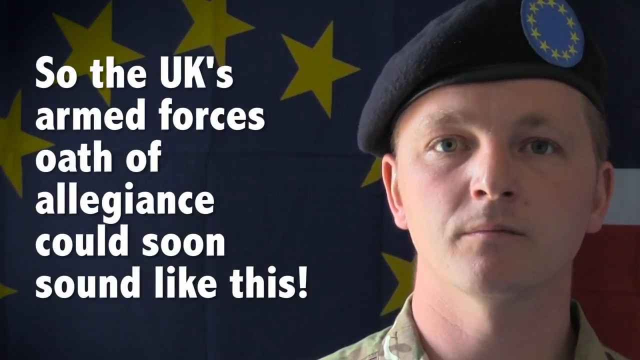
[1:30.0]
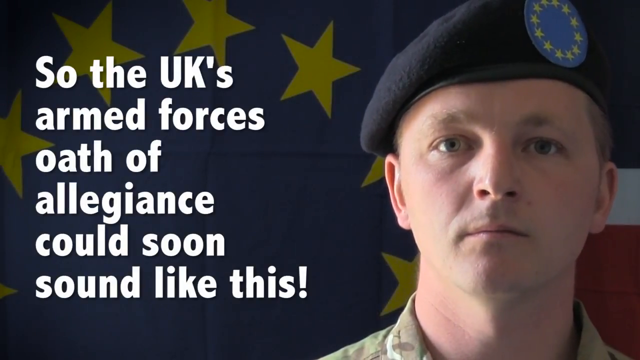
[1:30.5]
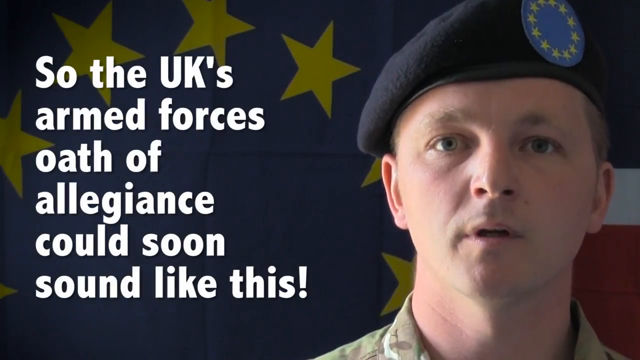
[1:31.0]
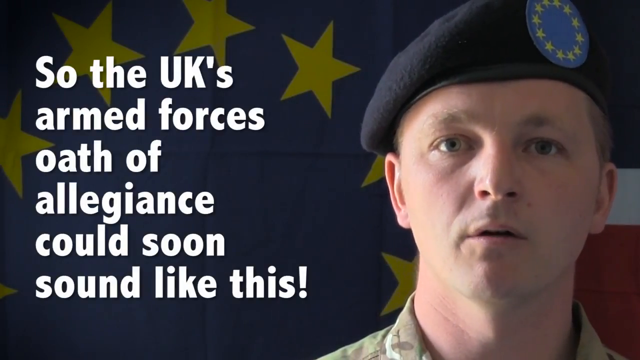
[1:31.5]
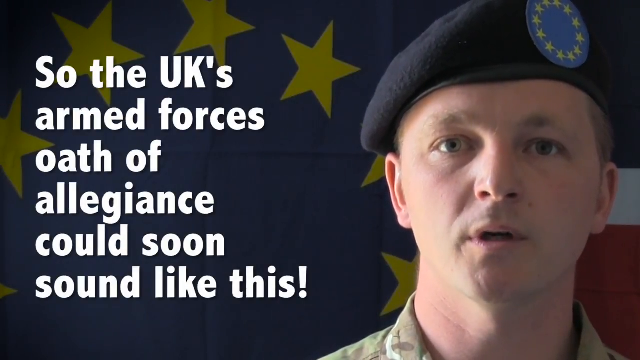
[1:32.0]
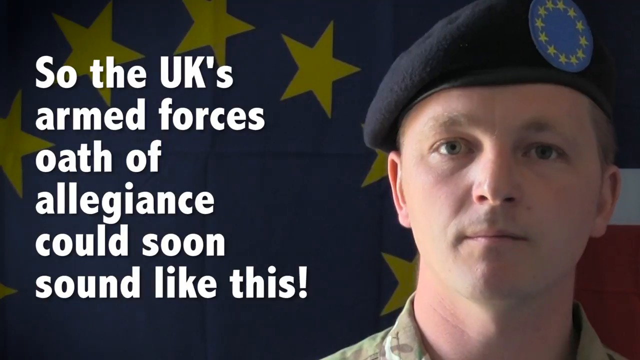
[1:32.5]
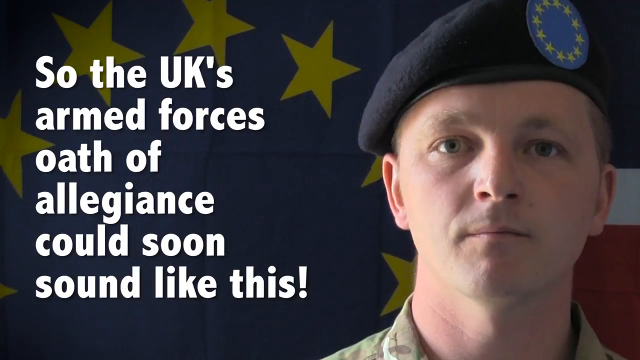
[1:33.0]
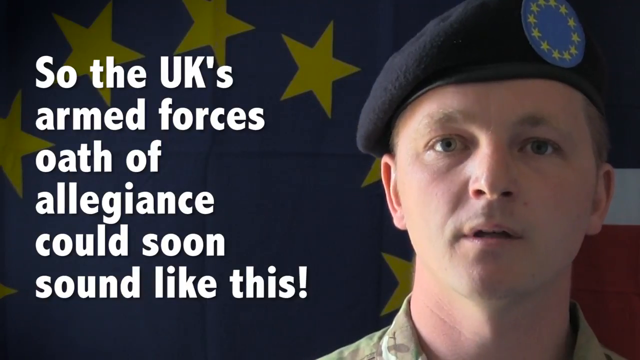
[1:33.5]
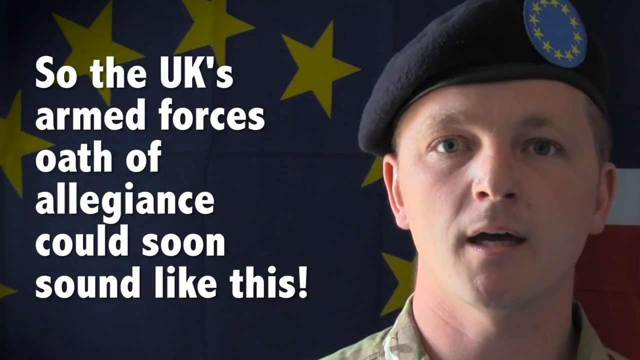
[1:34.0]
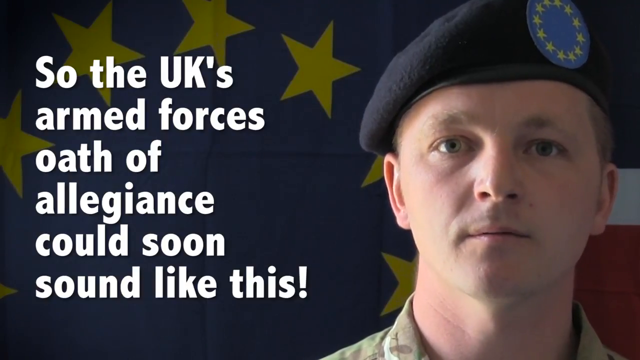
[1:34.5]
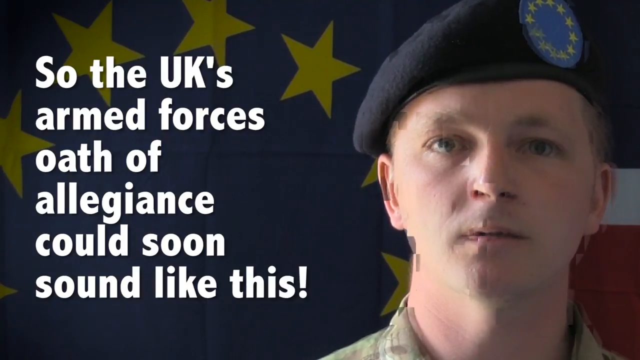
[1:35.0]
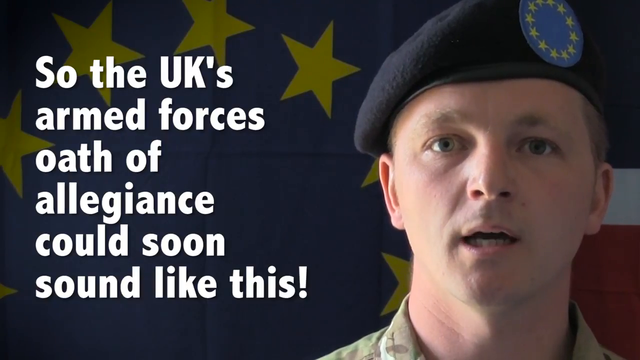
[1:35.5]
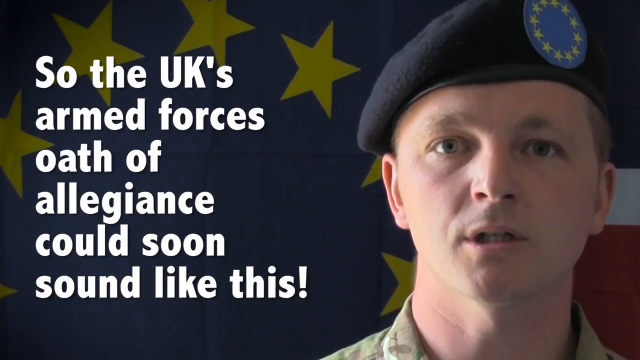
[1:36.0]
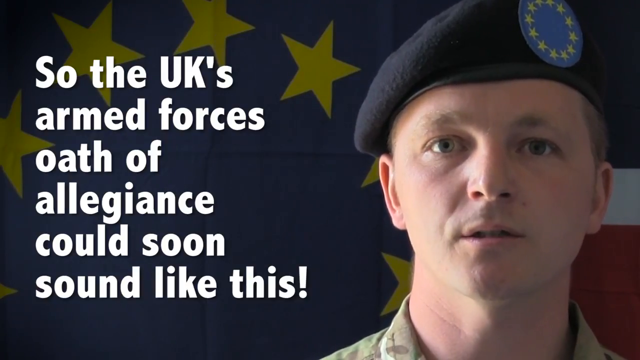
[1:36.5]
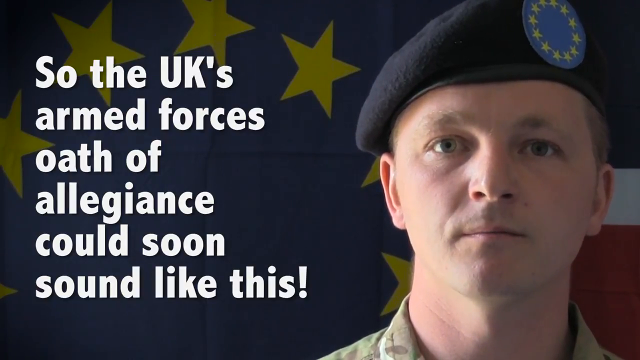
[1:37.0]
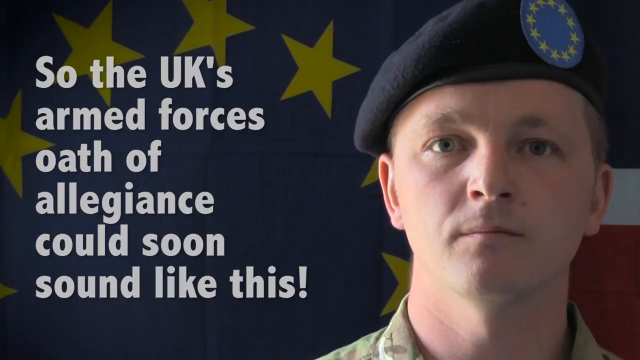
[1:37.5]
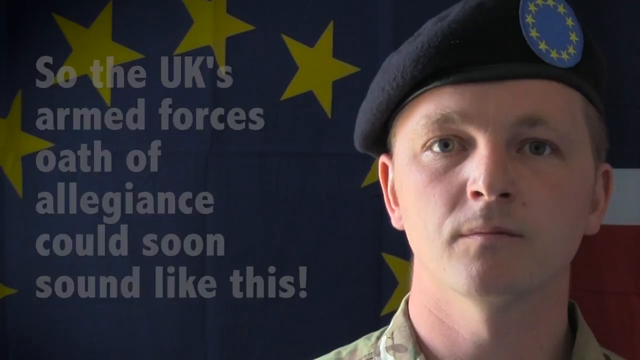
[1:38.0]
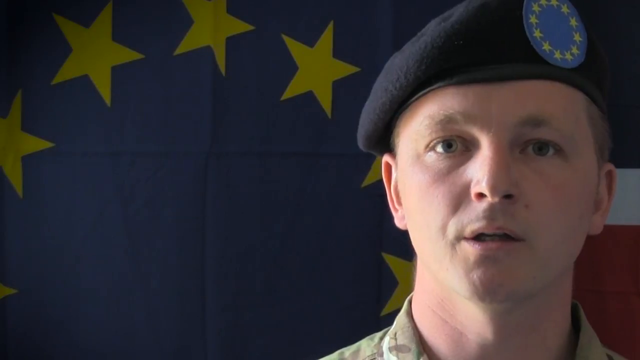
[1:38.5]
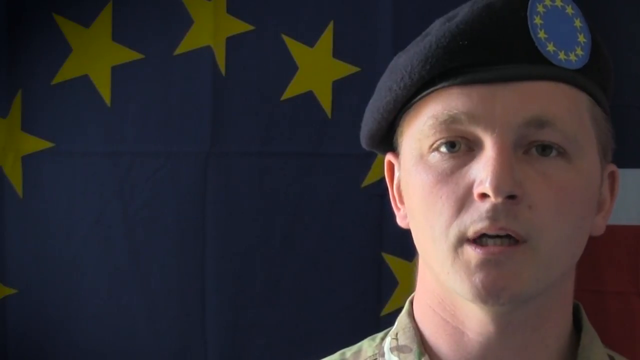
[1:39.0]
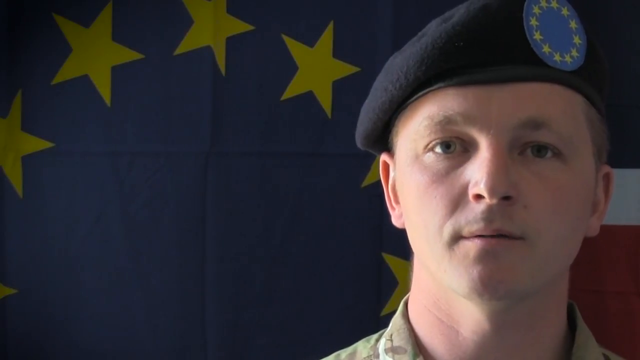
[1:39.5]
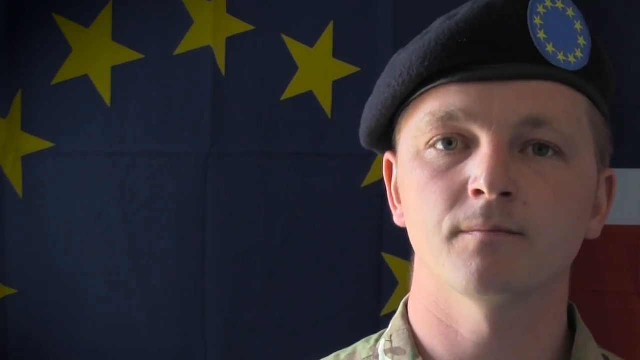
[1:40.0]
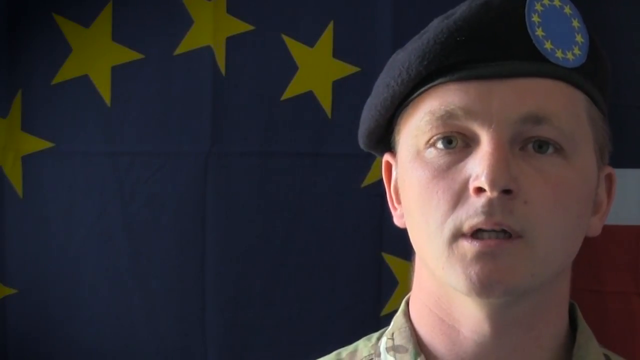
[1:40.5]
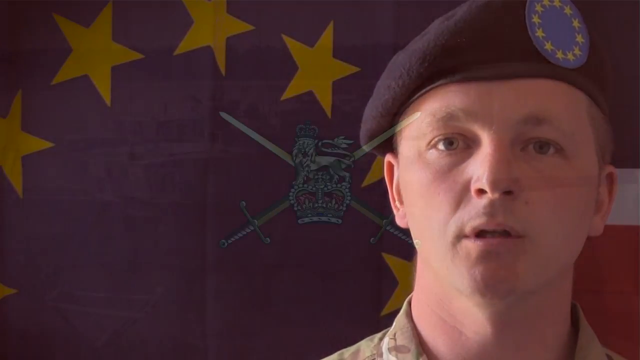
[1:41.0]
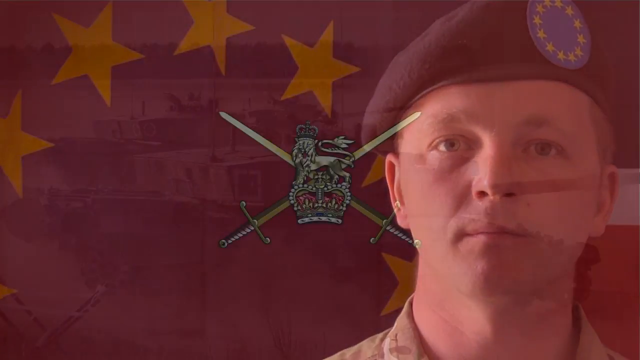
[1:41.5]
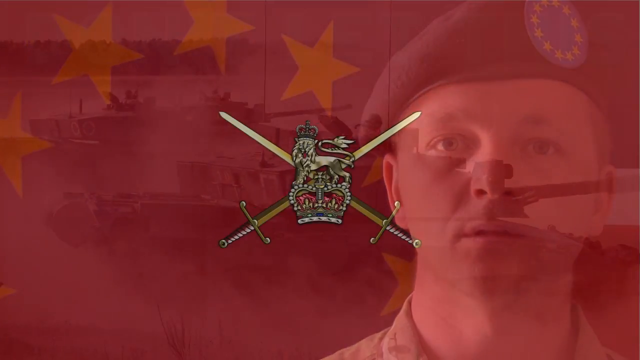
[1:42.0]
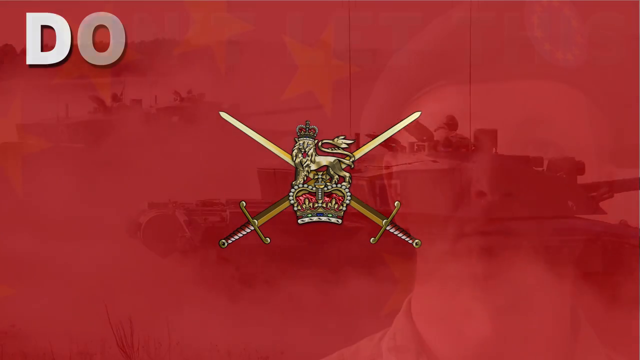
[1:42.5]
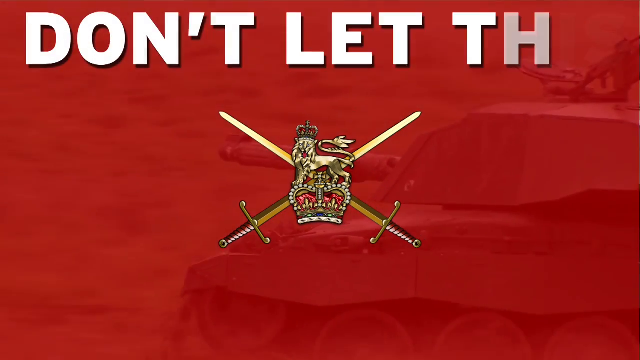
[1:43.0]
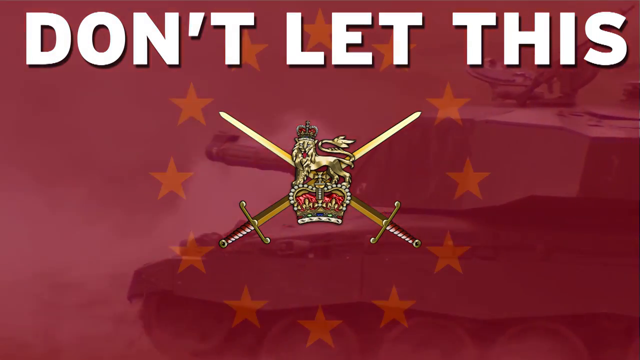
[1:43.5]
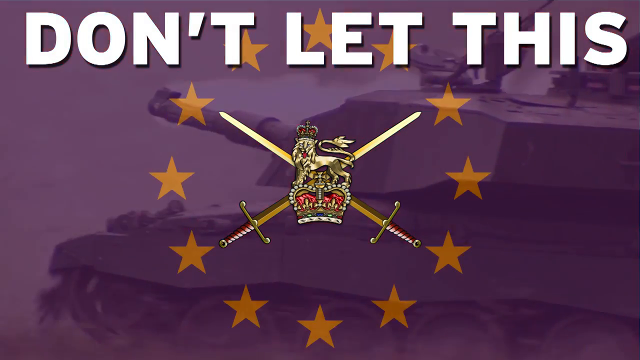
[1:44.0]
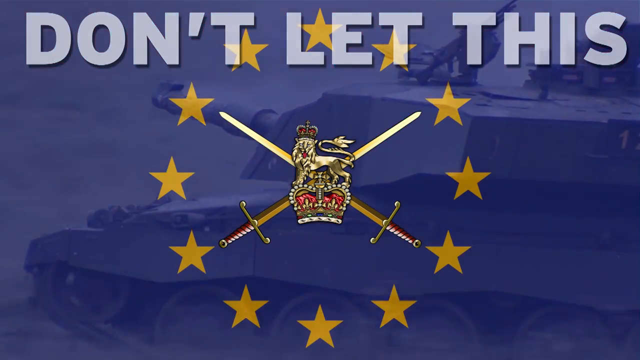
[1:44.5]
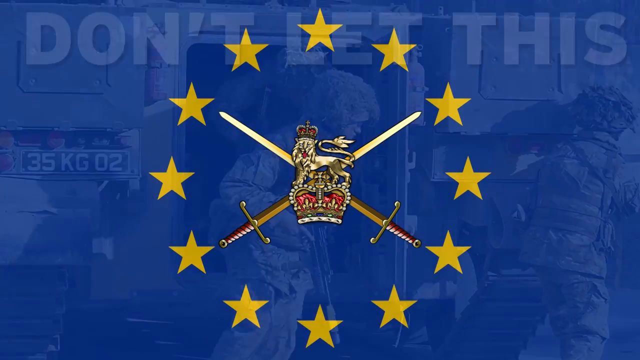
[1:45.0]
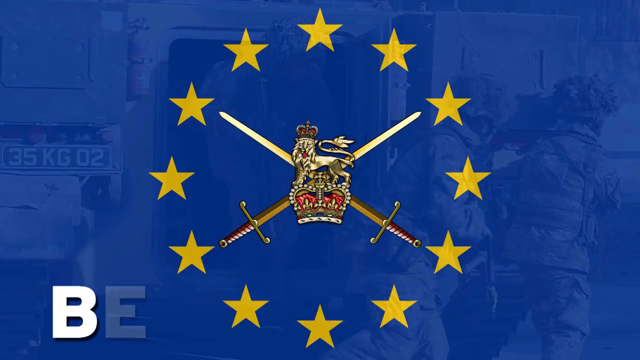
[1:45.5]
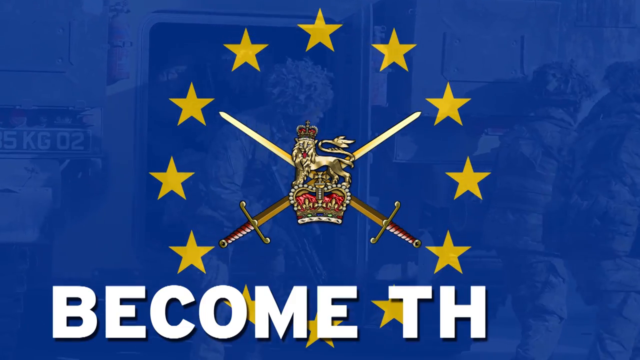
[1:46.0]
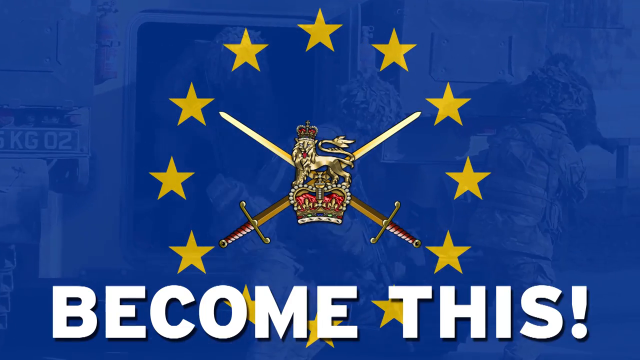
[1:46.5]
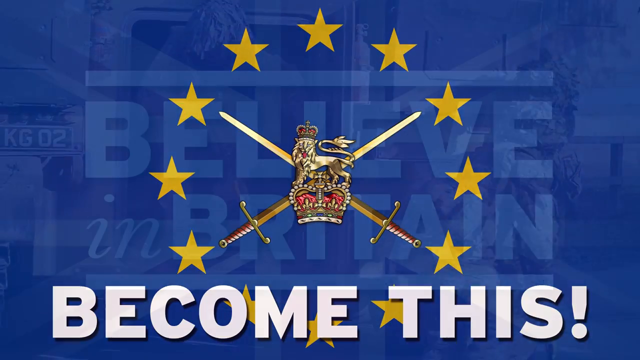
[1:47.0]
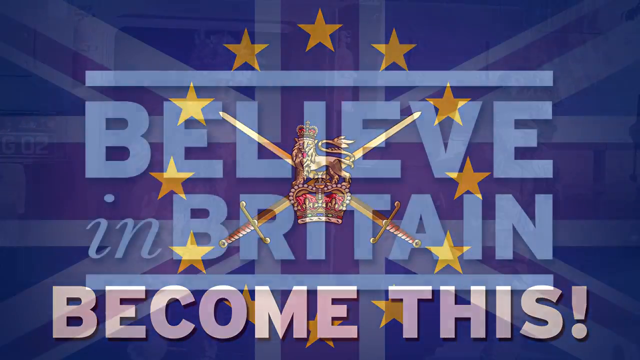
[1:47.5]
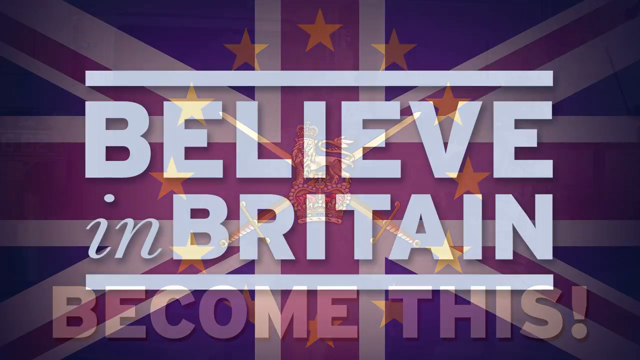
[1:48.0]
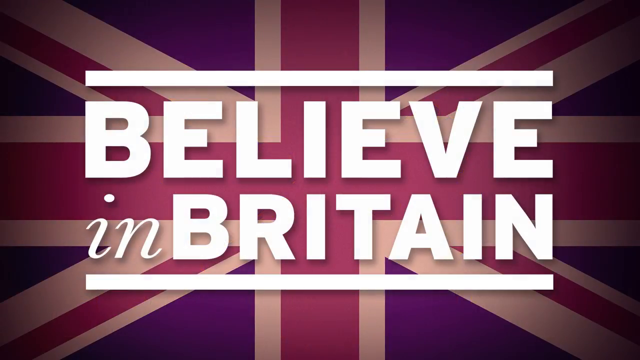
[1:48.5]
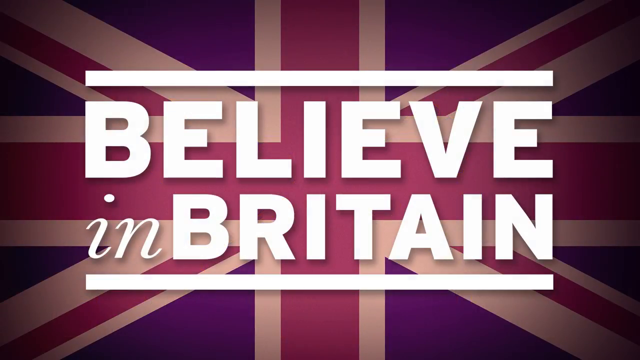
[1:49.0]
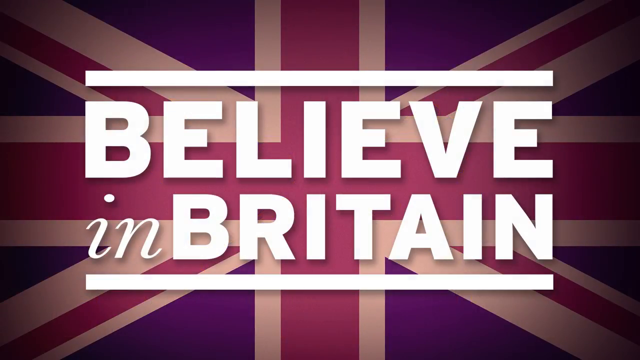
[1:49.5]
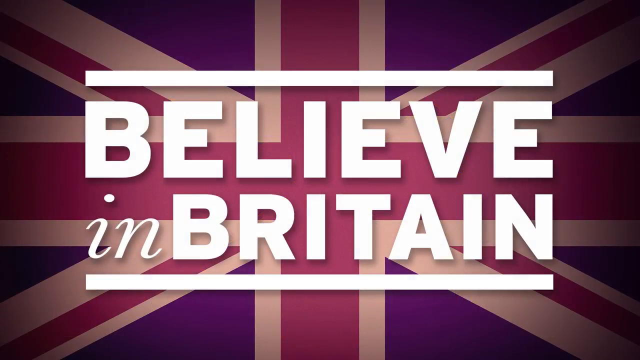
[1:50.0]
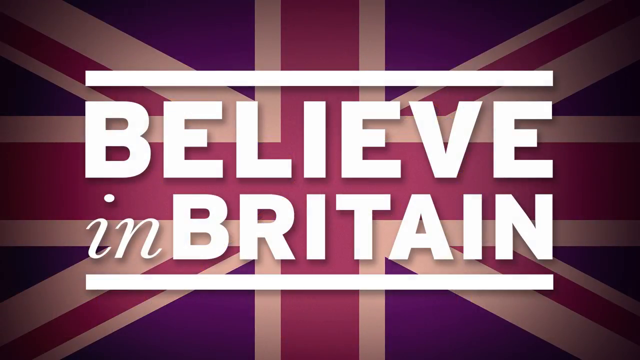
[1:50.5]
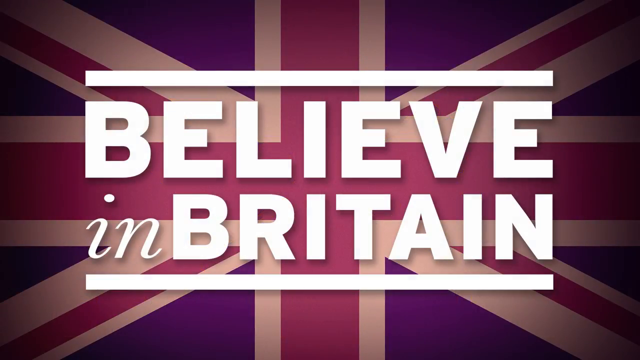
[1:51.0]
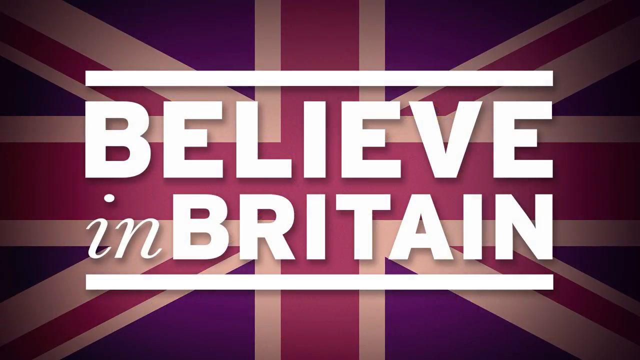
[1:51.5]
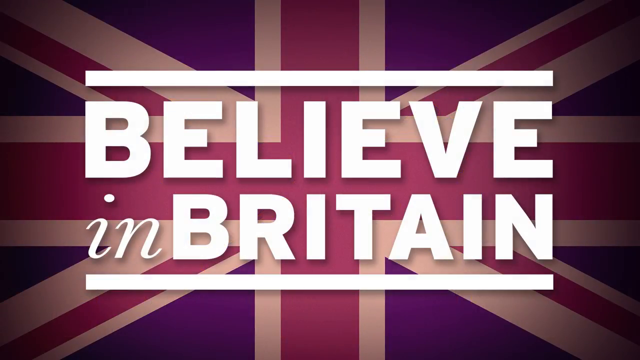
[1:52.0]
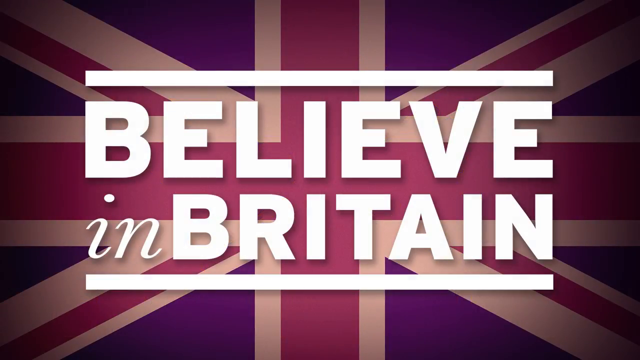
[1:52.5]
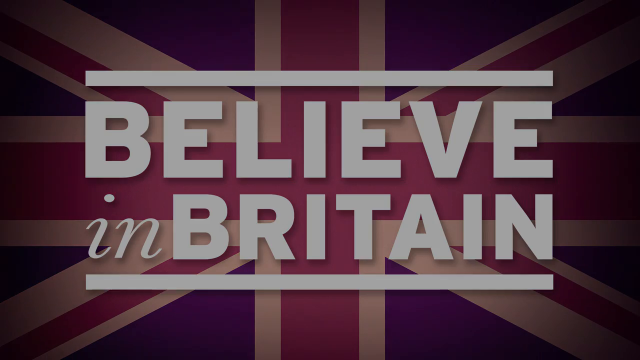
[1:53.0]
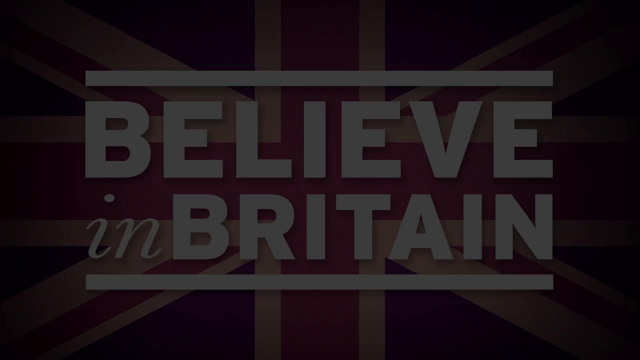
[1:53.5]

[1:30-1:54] The text "so the UK's armed forces oath of allegiance could soon sound like this" is shown. Then a man who looks like a soldier and wears a hat speaks to the camera. The flag behind him turns red and the words "don't let this become this. Believe in Britain." appear, then fade away into the background. A blue flag with a circle of yellow stars is visible, and the man wears a black hat with a circular blue patch with yellow stars on it, with red and white stripes behind him. He looks into the camera and moves his mouth as he talks. A tank drives by in the background, followed by another tank. Several people hustle out of a building, and the words "believe in Britain" come onto the screen in front of the British flag. Finally the flag fades away and the screen turns black.